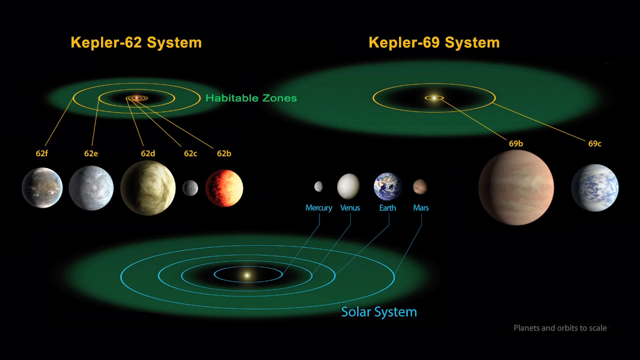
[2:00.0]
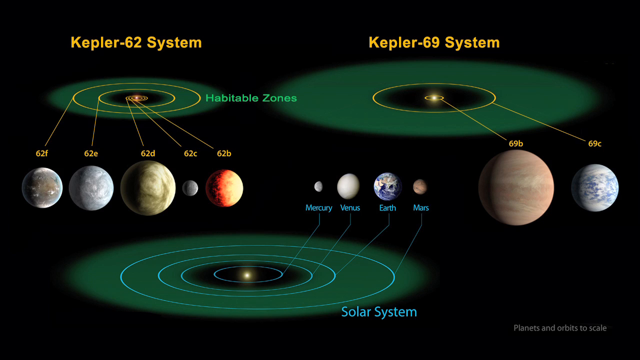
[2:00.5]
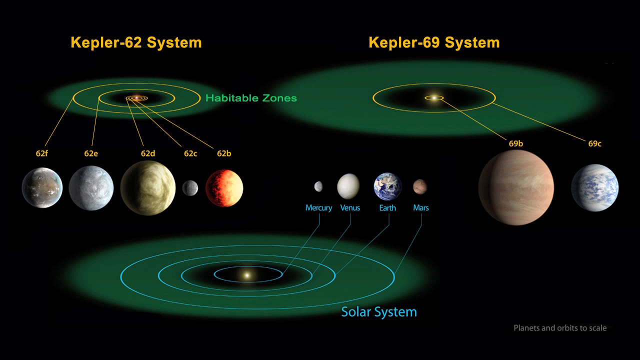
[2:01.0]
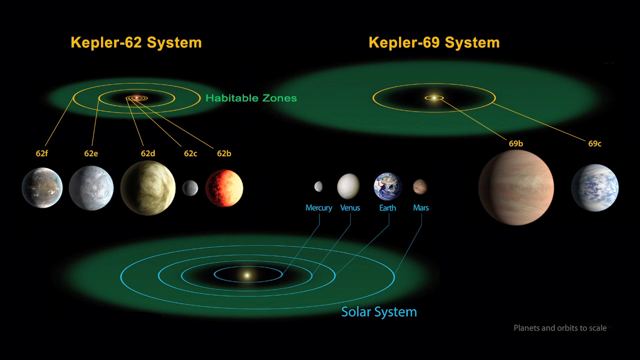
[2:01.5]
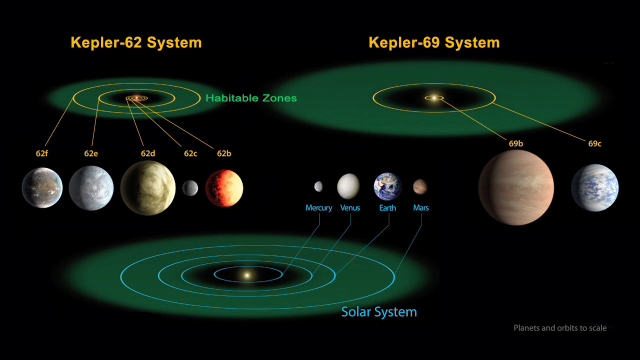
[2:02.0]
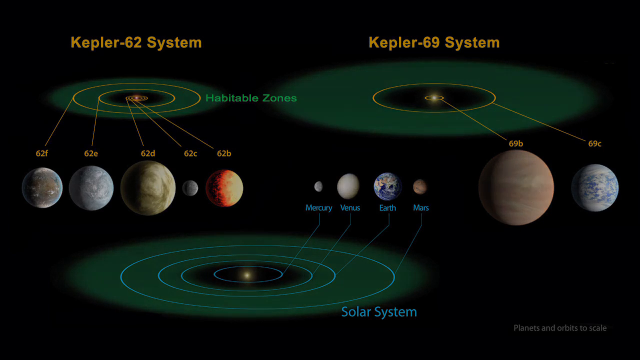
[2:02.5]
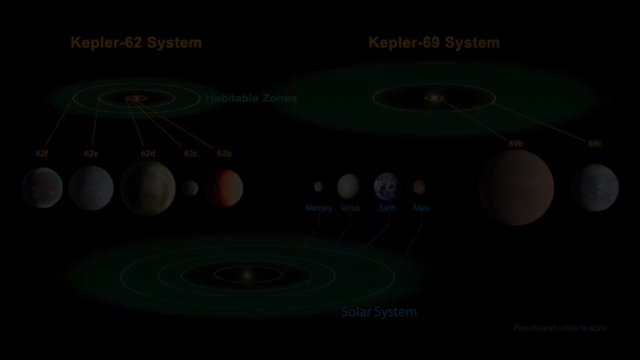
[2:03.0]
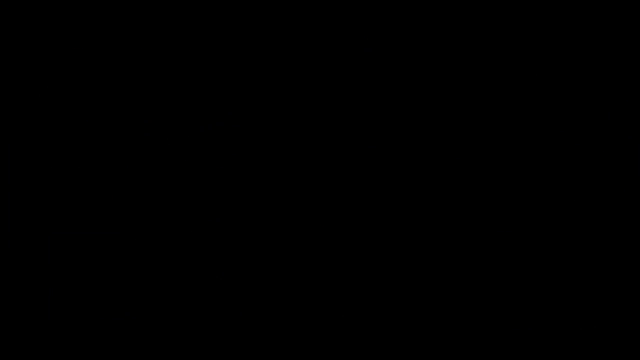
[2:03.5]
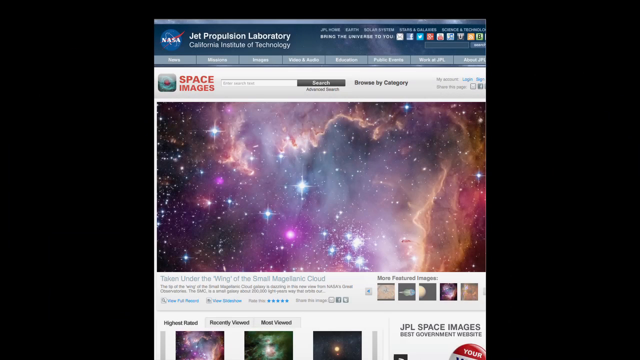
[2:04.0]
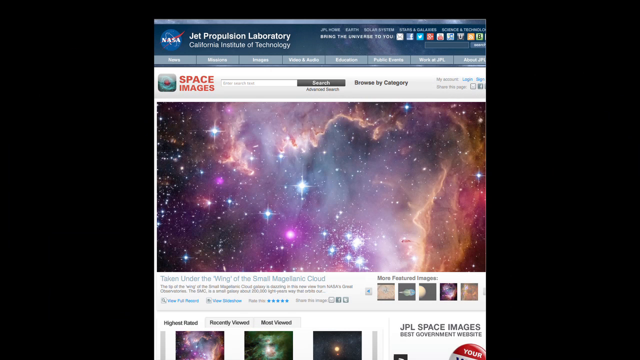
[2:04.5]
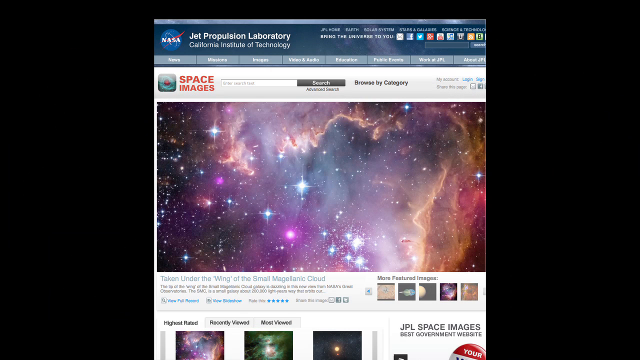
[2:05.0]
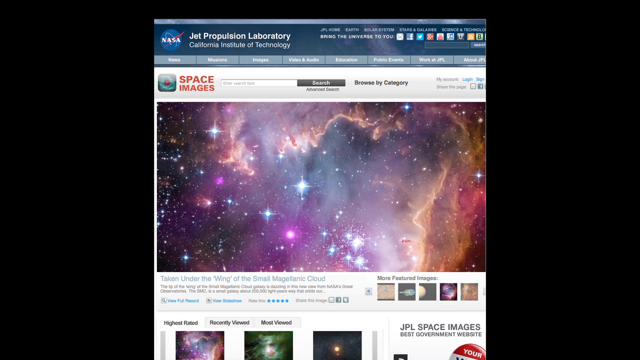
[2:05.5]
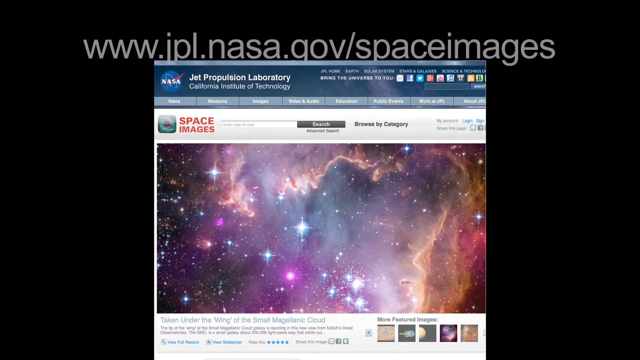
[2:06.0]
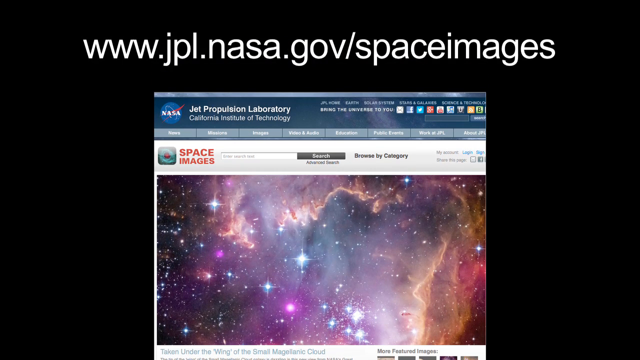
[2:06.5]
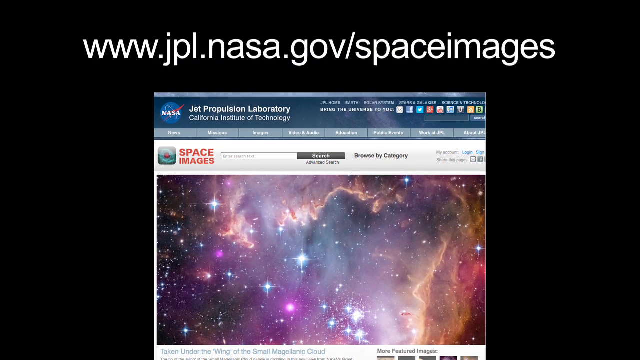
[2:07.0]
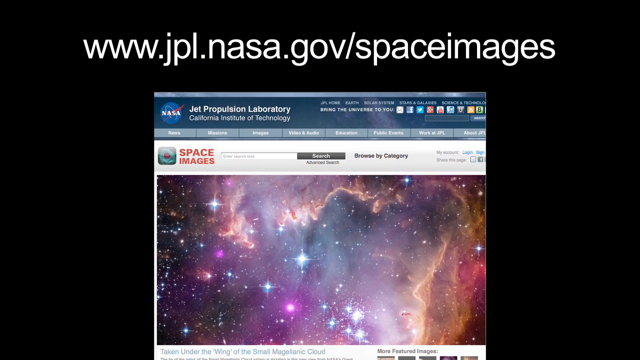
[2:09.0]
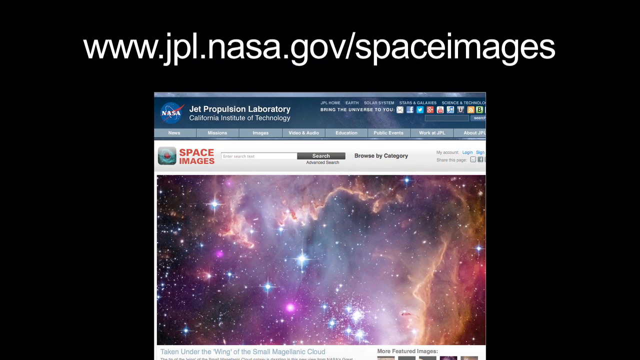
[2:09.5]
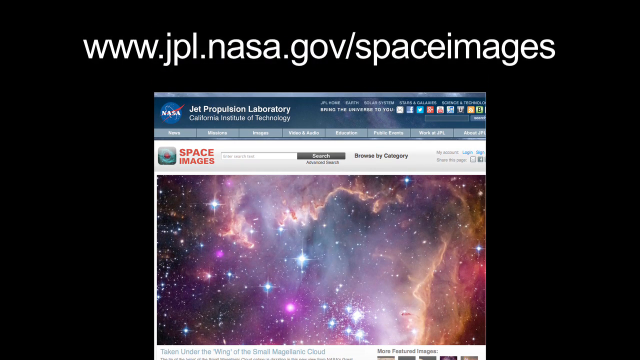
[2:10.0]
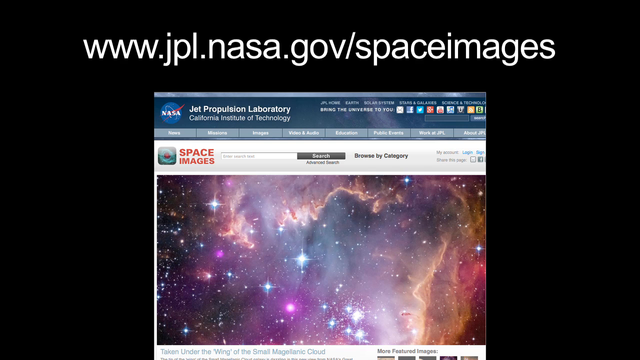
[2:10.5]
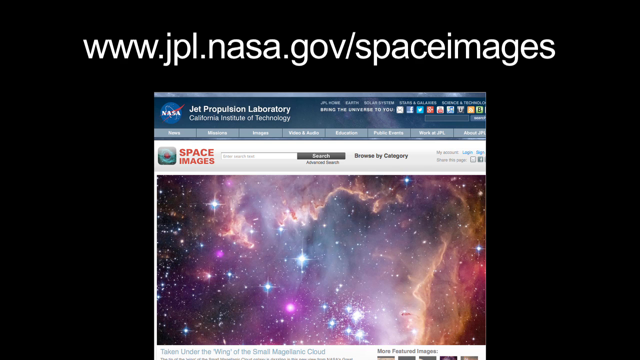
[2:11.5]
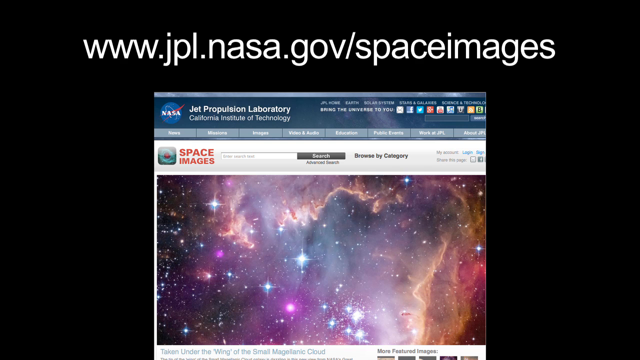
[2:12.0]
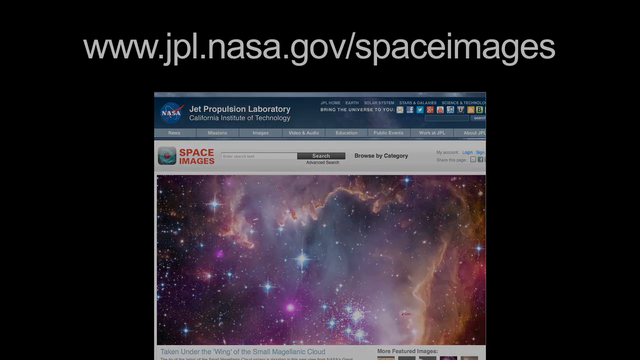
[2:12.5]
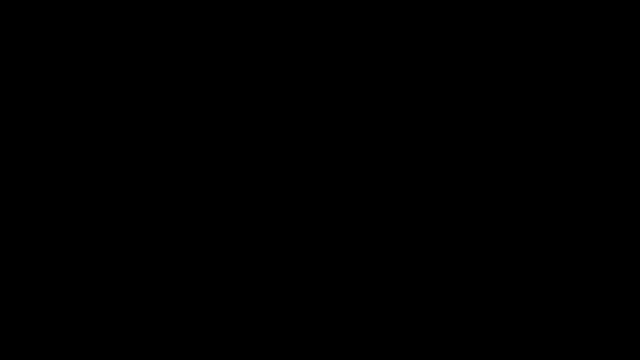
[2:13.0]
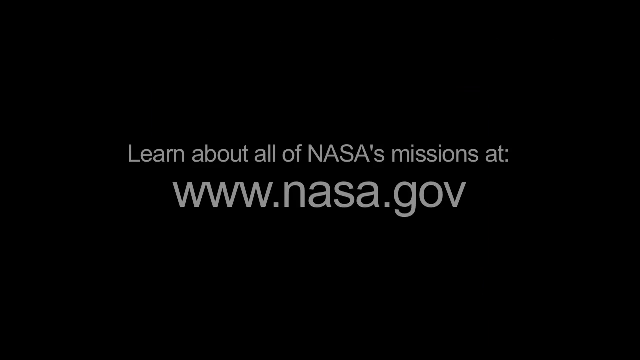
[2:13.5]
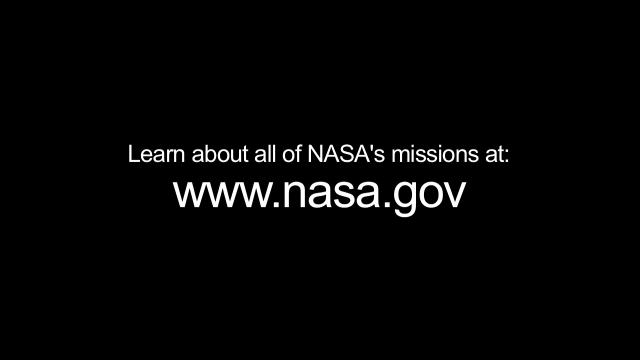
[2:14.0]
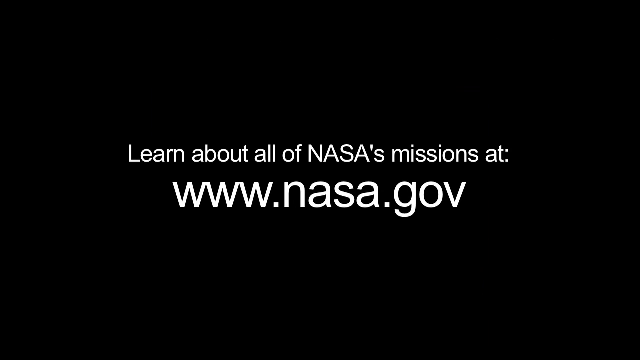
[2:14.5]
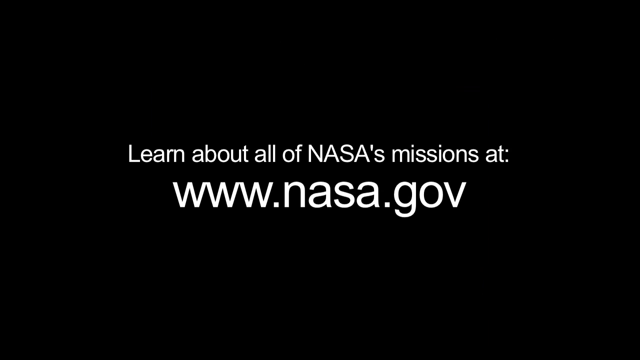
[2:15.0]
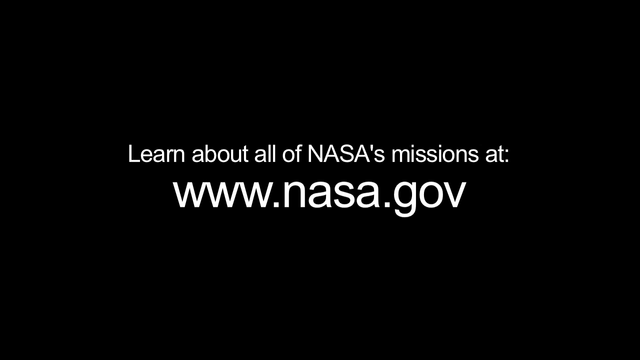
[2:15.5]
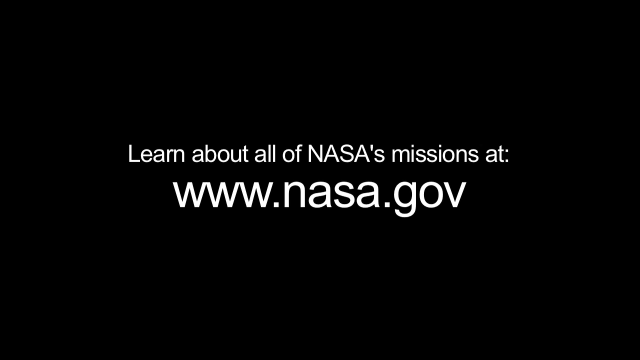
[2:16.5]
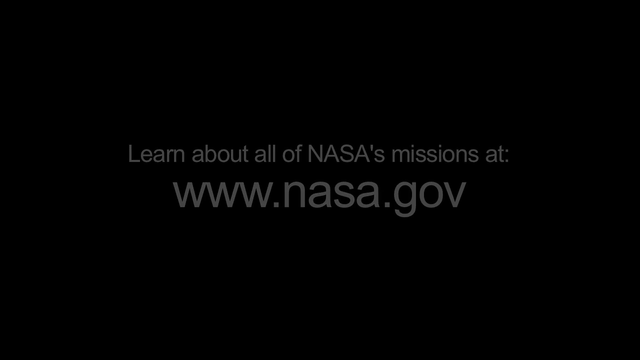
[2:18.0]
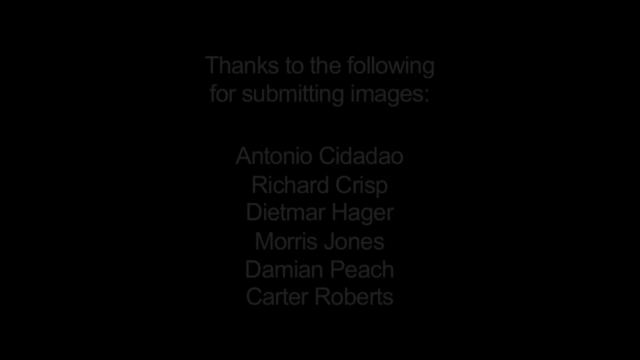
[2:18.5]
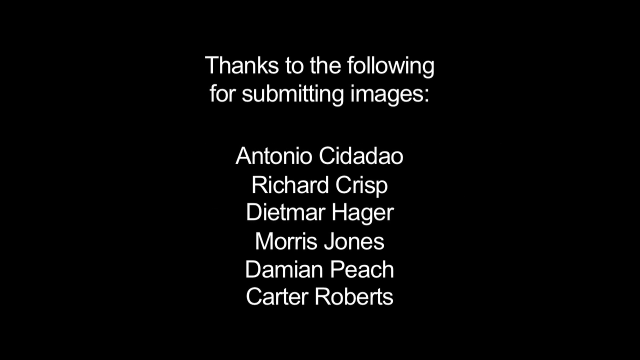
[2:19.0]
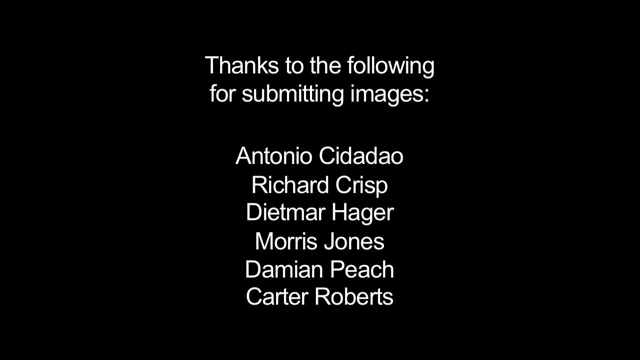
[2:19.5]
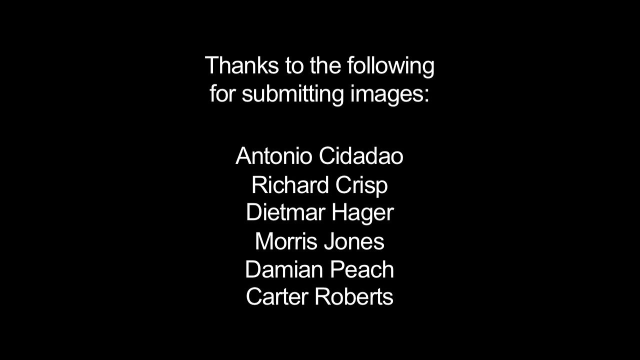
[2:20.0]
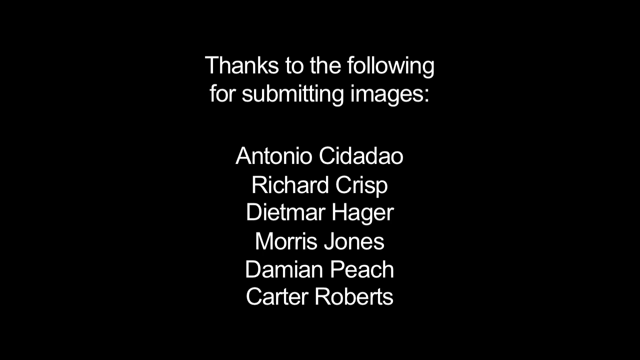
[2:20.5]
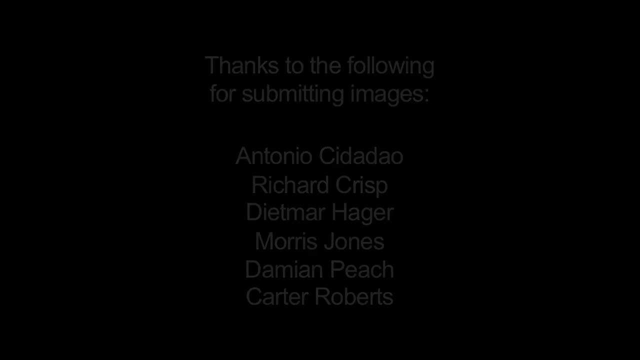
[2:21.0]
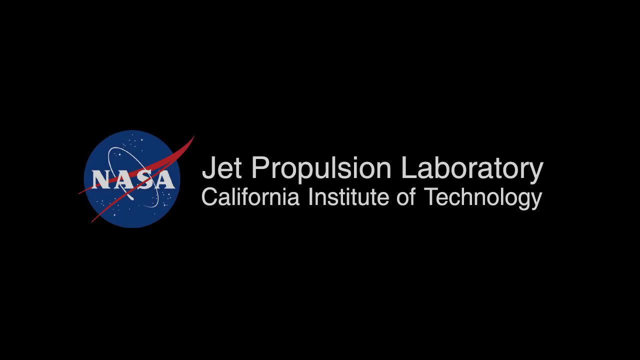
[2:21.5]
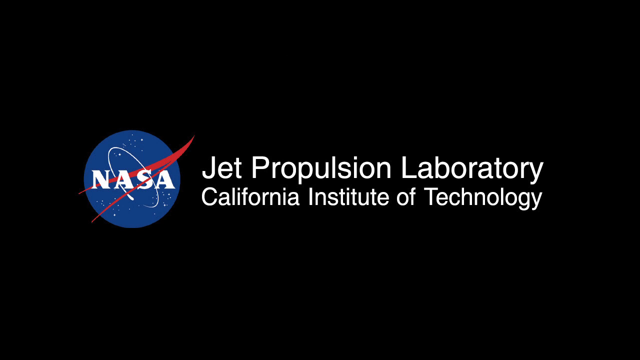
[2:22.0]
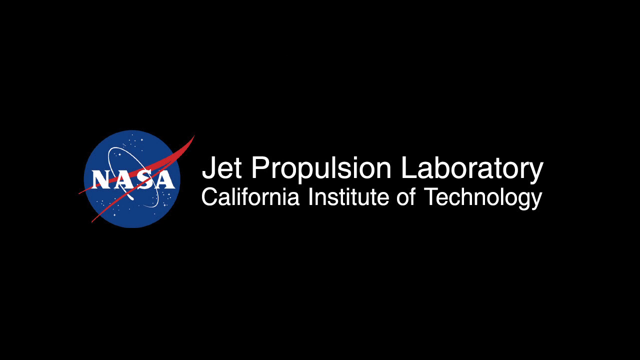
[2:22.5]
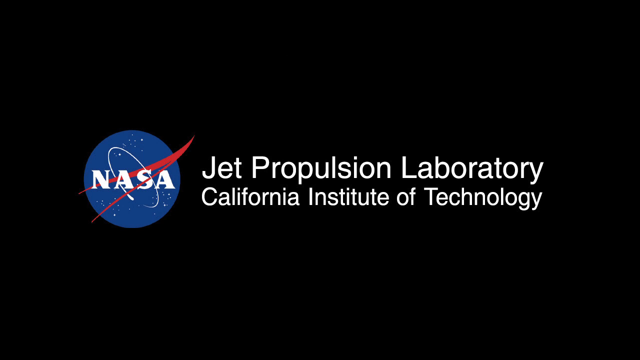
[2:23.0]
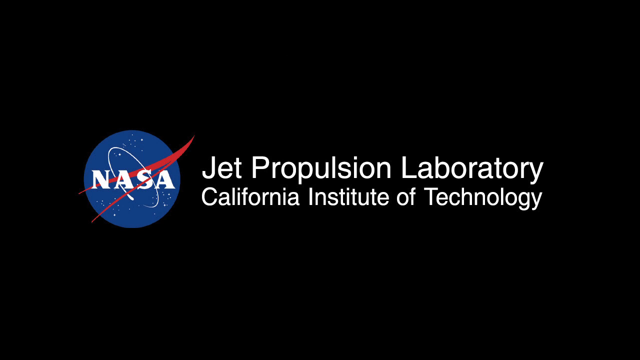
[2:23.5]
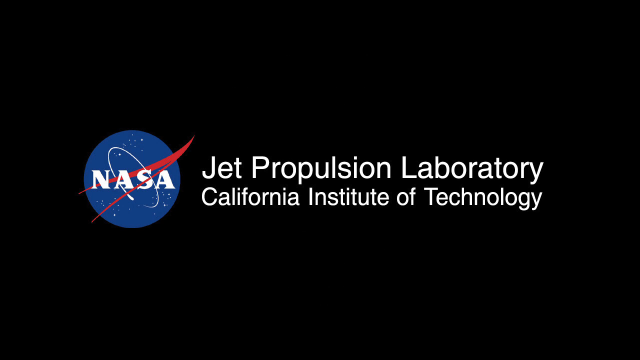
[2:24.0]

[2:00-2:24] The center of the screen shows the planets Mercury, Venus, Earth and Mars, with "Solar System" in blue letters at the bottom middle. At the top left, orange letters read "Kepler-62 system," and at the top right, orange letters read "Kepler-69 system." Under Kepler-62 system, green letters read "Habitable Zones." Five planets are depicted in the Kepler-62 system, named 62F, 62E, 62D, 62C and 62B, and two planets in the Kepler-69 system, named 69B and 69C. The video then switches to an image of a web page that reads "Jet Propulsion Laboratory, California Institute of Technology" at the top left, with a NASA logo to the left of that.